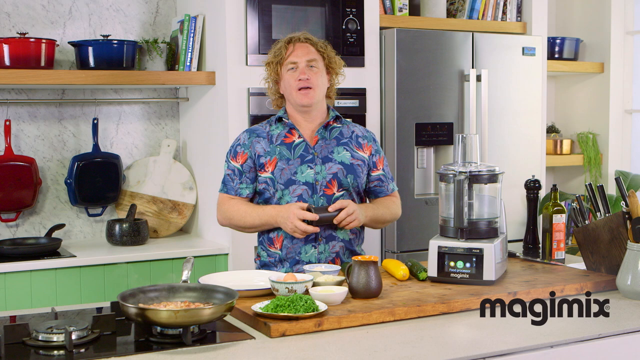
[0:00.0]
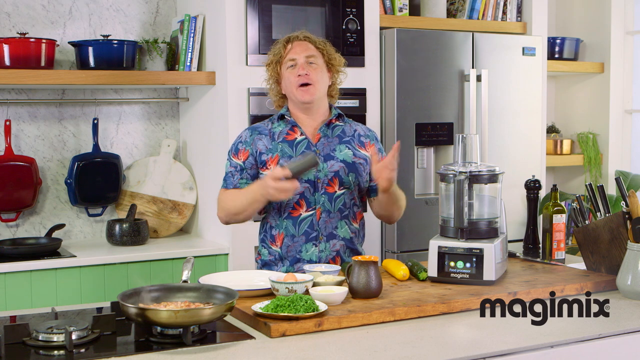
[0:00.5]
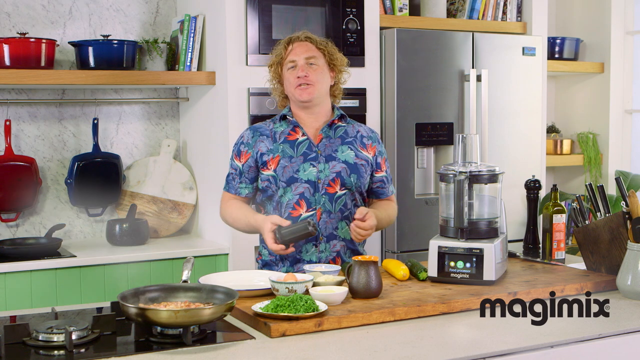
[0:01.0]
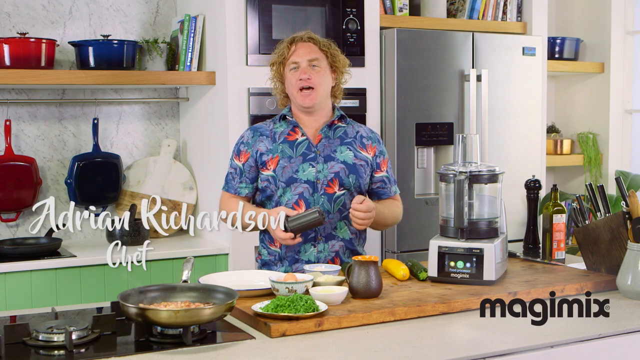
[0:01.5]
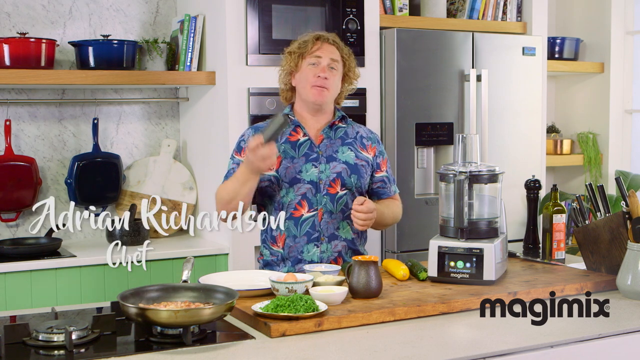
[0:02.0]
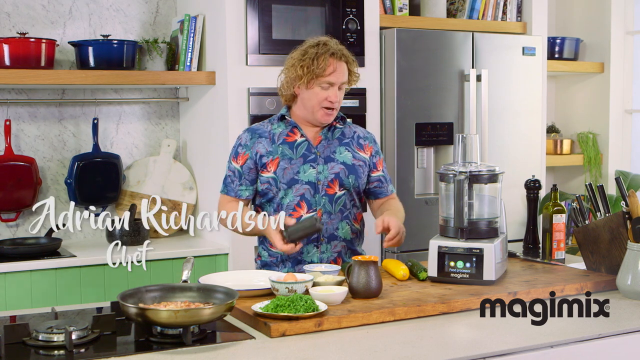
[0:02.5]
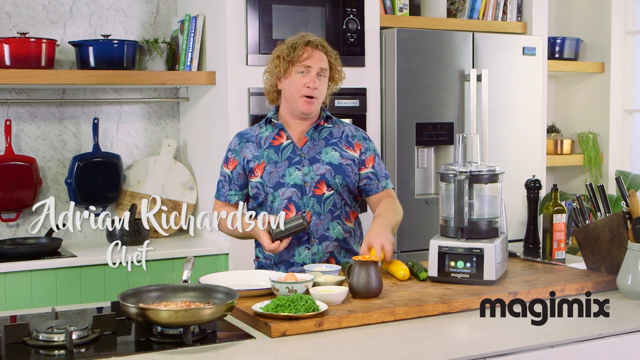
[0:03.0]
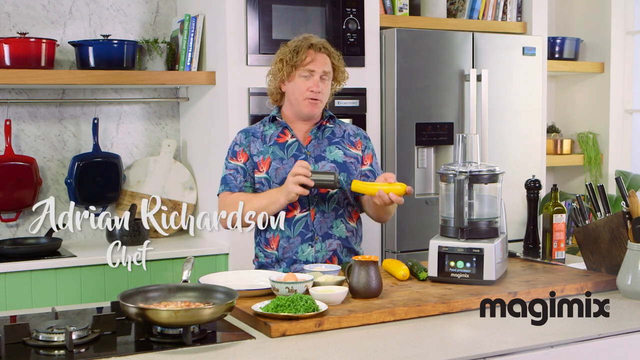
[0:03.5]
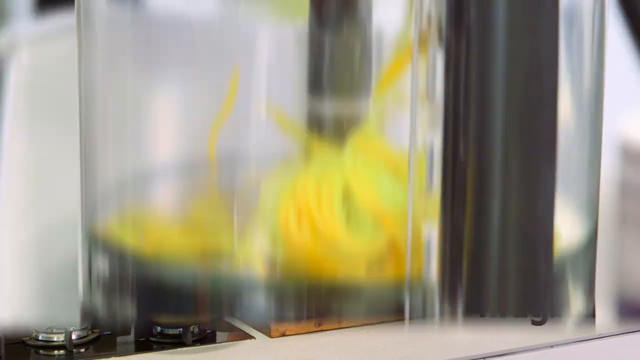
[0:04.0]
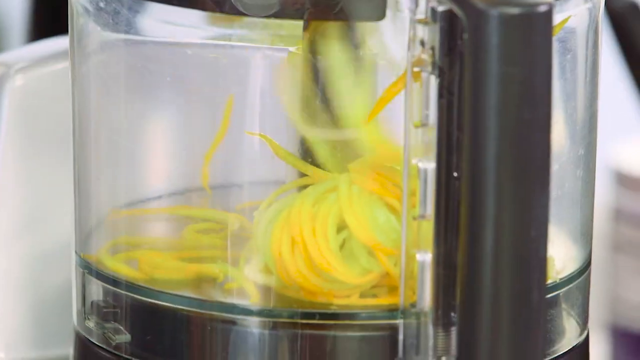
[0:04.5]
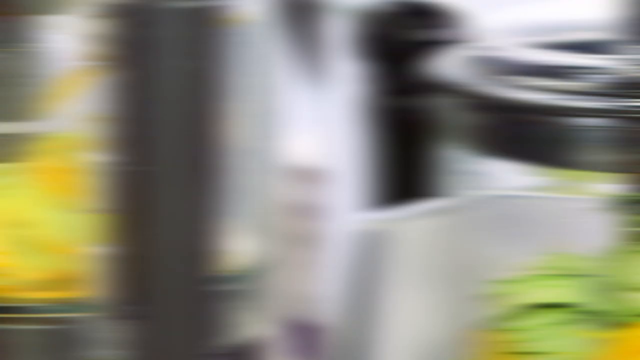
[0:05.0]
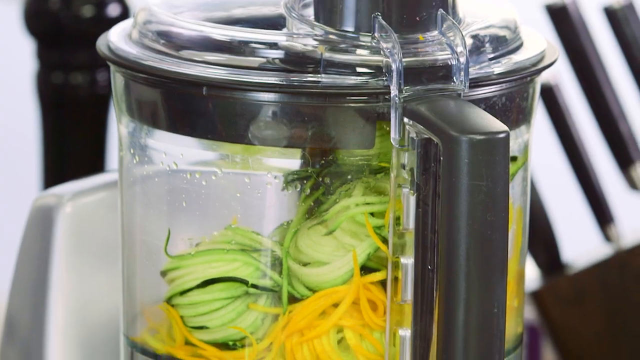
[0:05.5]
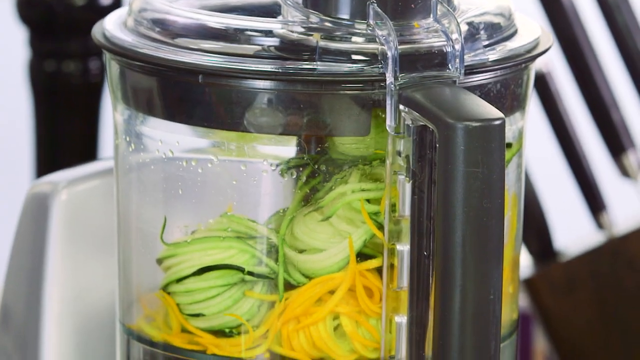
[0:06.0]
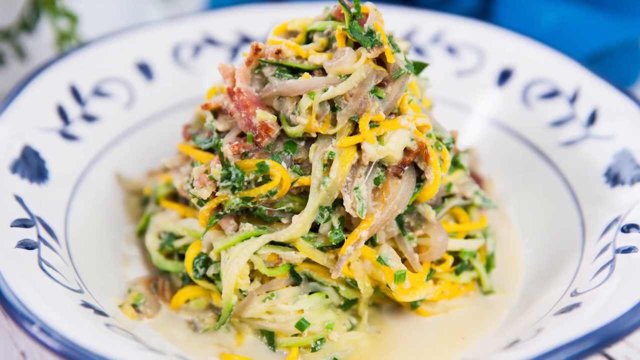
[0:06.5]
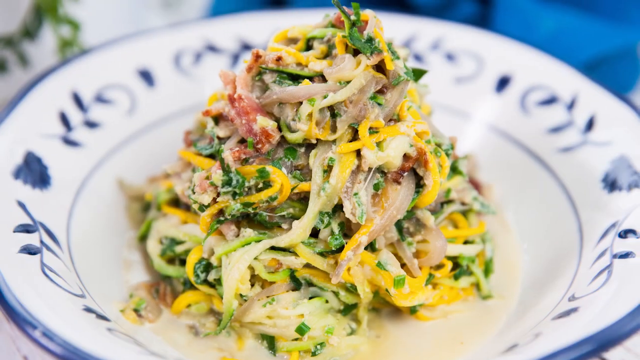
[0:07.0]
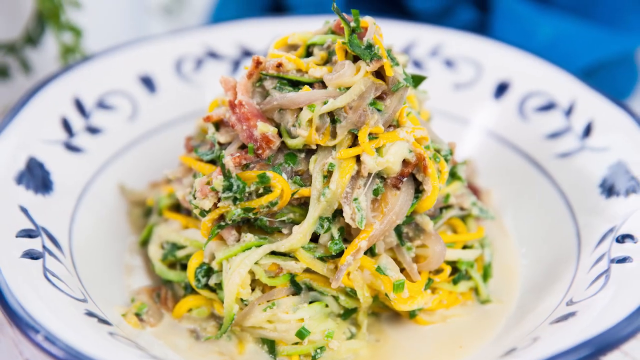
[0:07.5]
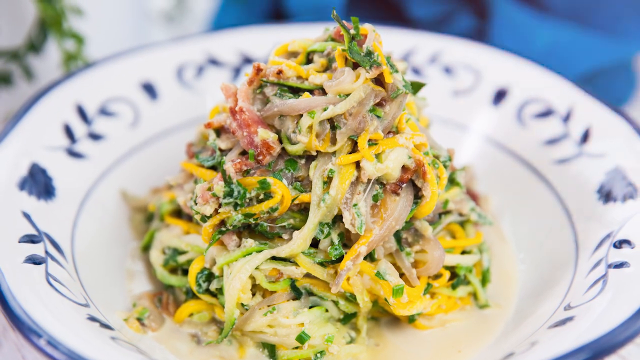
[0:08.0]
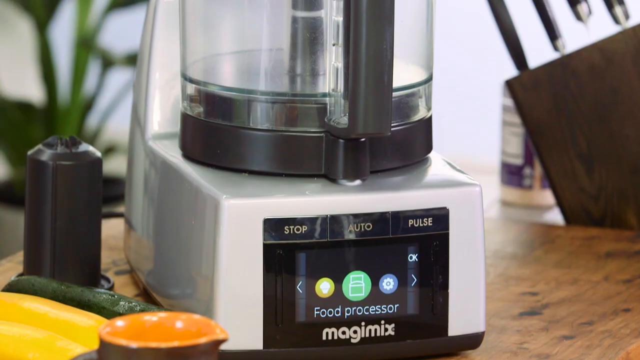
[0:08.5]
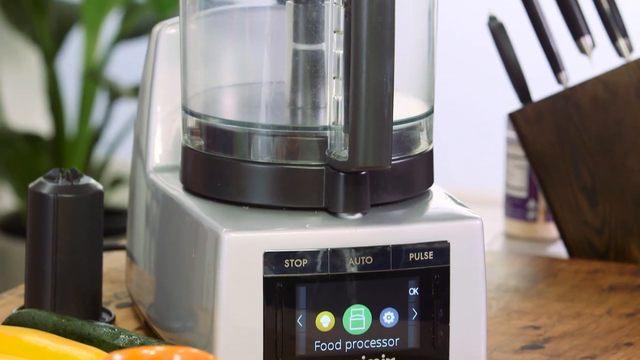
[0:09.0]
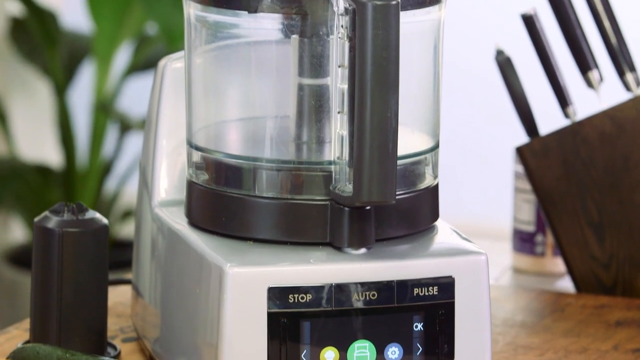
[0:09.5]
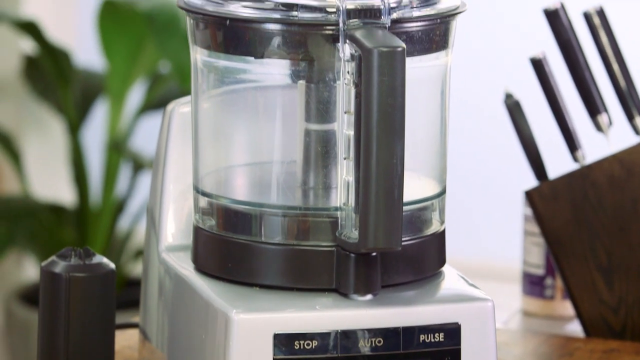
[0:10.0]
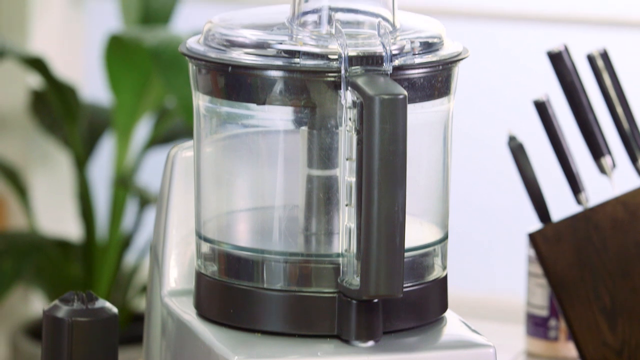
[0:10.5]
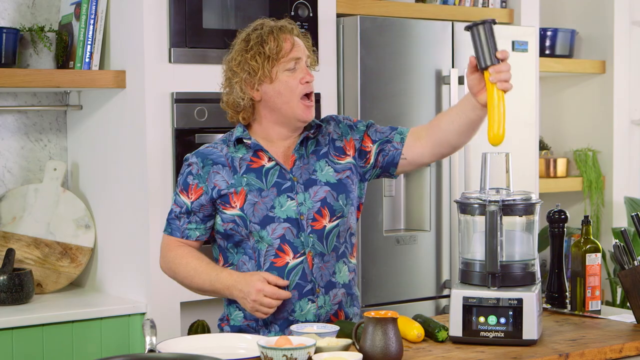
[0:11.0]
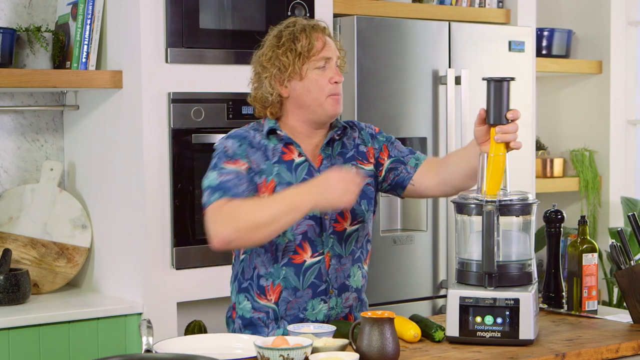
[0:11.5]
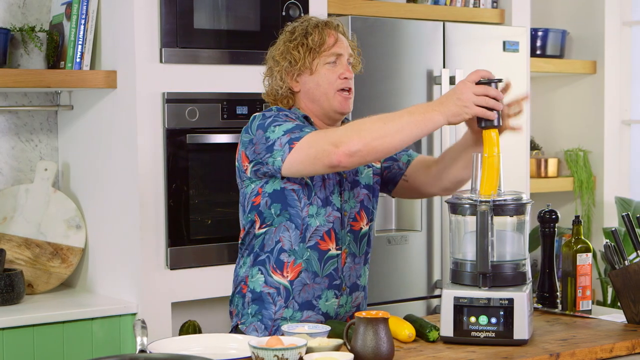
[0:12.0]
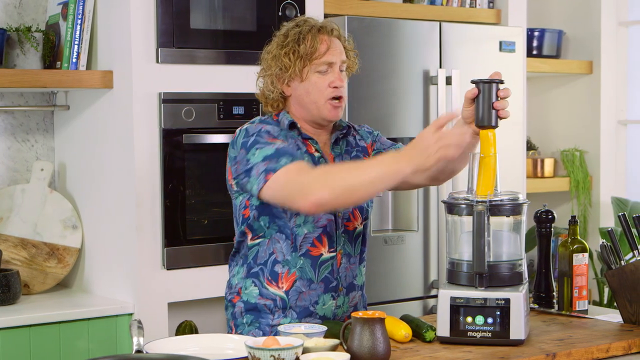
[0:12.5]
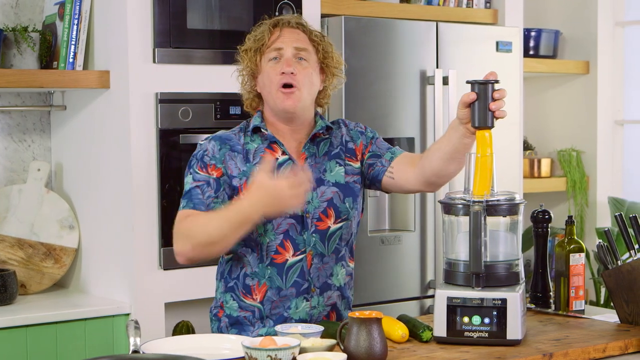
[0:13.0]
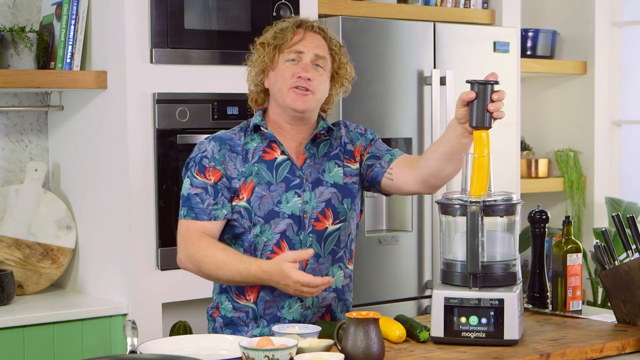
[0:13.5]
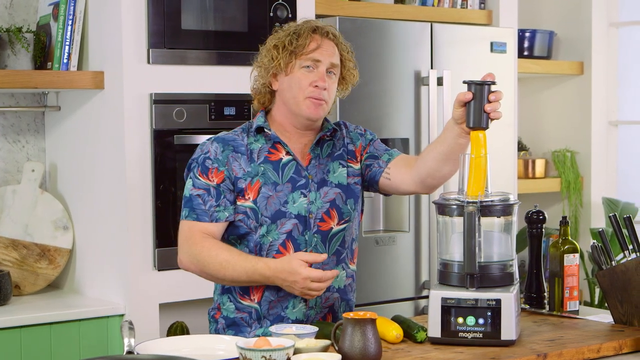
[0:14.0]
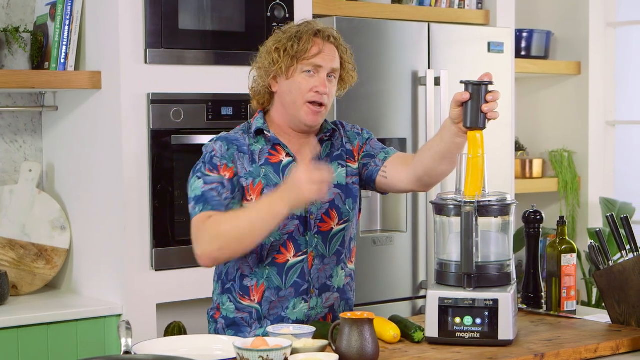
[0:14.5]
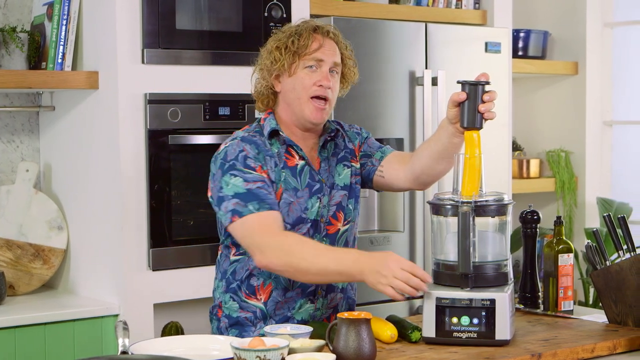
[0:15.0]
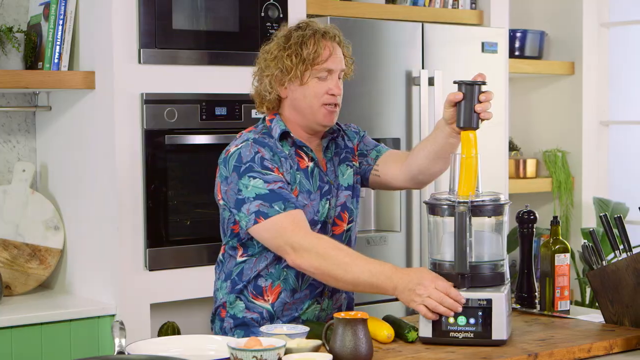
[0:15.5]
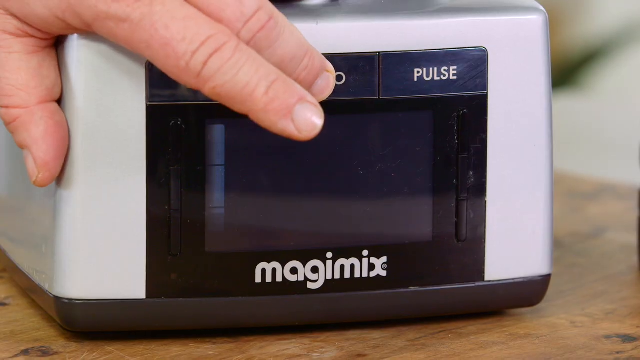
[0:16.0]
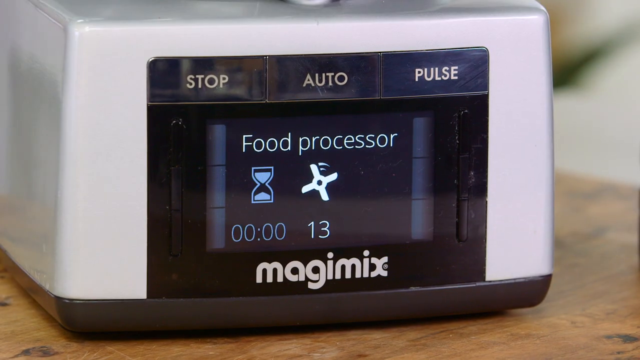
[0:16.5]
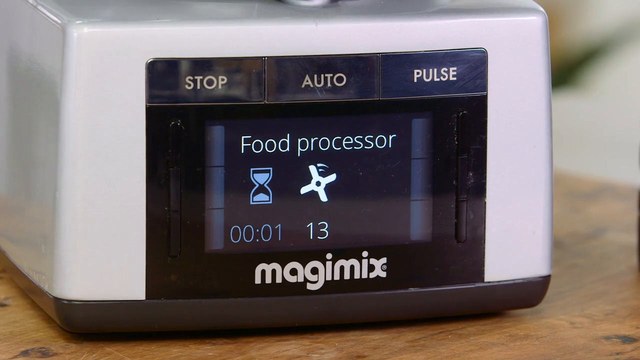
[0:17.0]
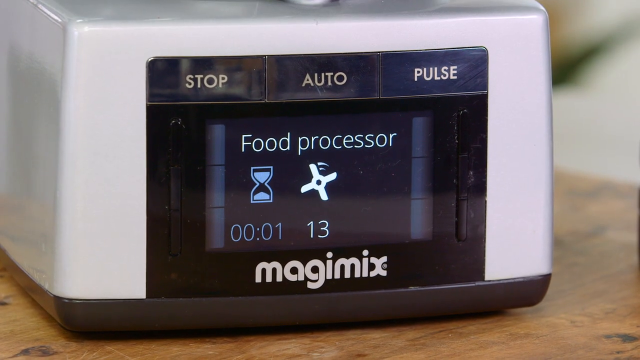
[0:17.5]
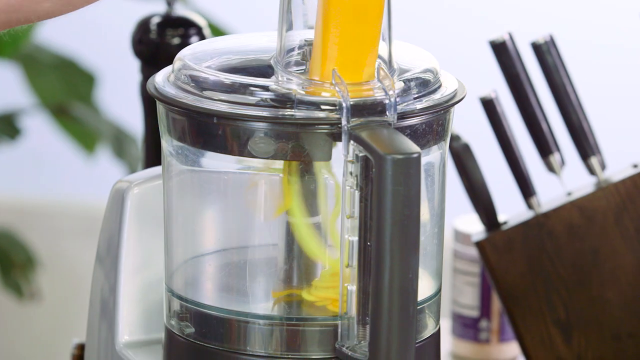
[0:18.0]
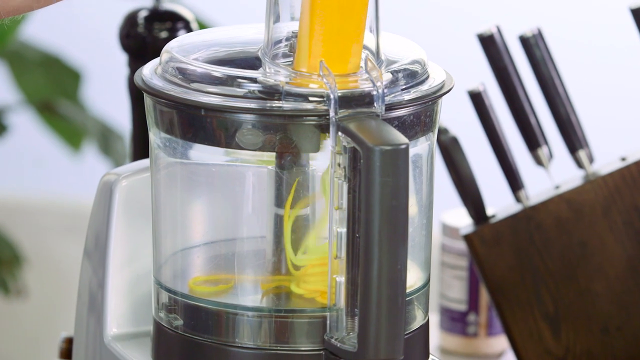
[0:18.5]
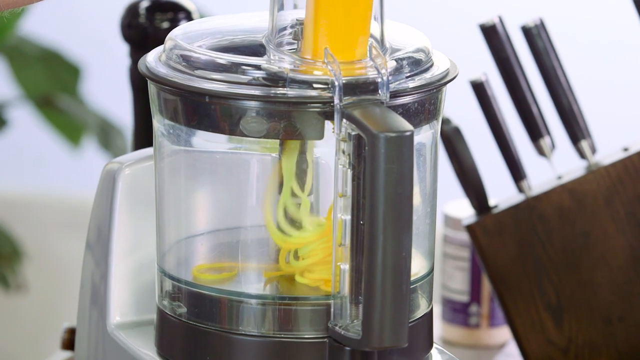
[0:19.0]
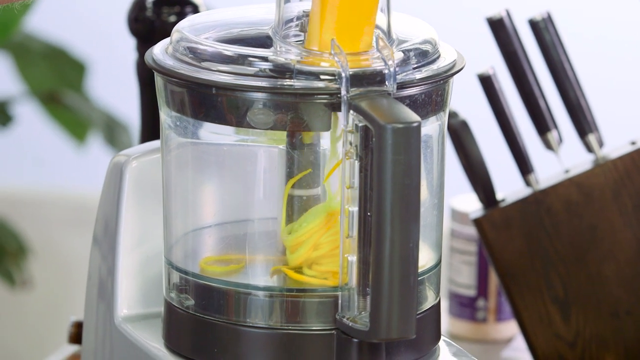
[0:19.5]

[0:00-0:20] The kitchen is very bright, with white countertops, white walls, and bright pans and pots. A young man in the kitchen wears a summer shirt with blue and red flowers and feathers. He has curly, long, golden-brown hair, thin lips and small eyes, and a wide chest; he looks like he goes to the gym. The chef is Adrian Richardson, and this is his kitchen. He holds what looks like a brown chopping utensil. On the countertop is a vegetable grinder, and there is a brown and orange jug on the table. There is also a plate full of scallions, a bowl with eggs, and a saucepan on the stovetop.